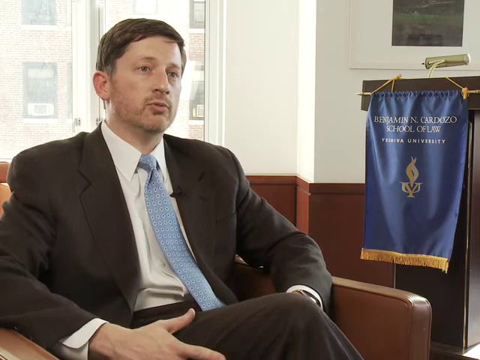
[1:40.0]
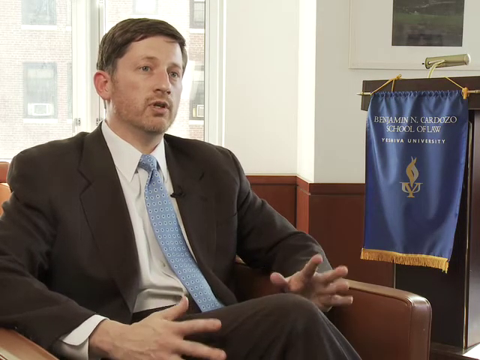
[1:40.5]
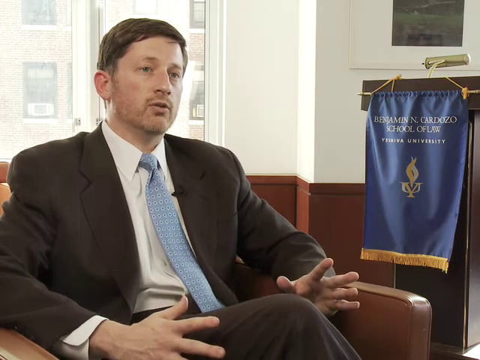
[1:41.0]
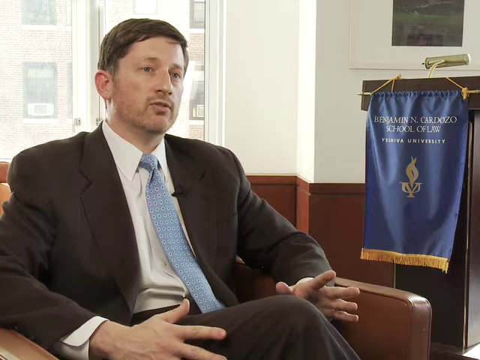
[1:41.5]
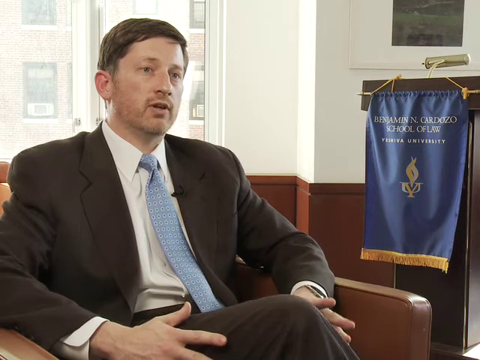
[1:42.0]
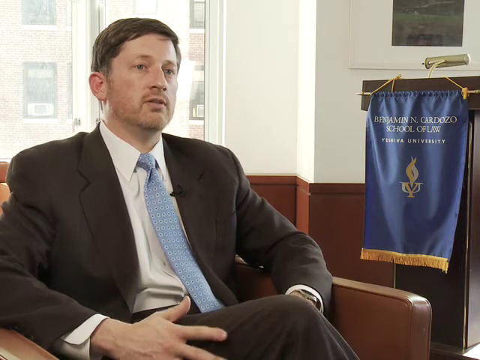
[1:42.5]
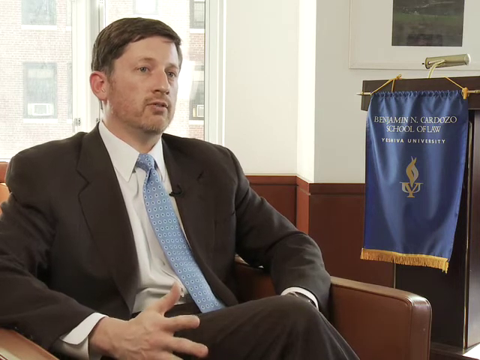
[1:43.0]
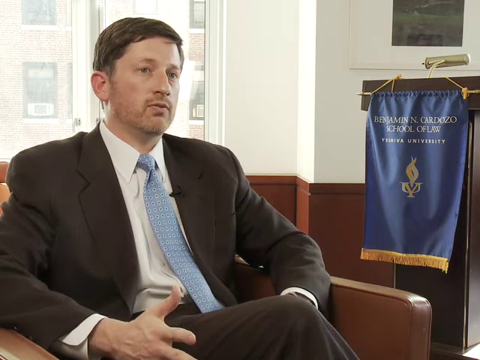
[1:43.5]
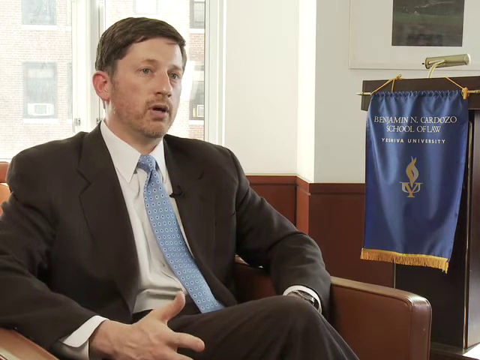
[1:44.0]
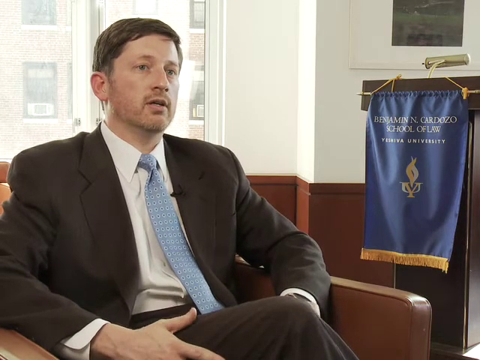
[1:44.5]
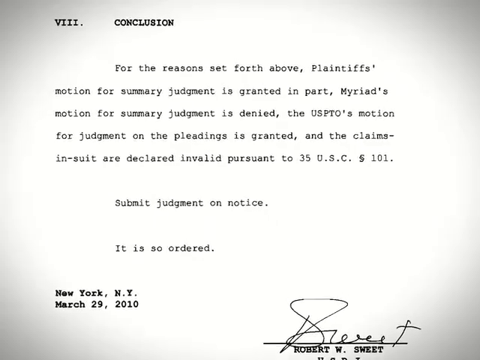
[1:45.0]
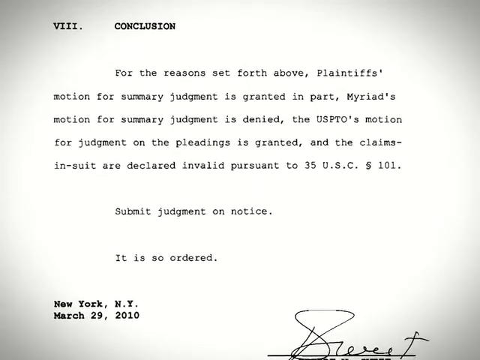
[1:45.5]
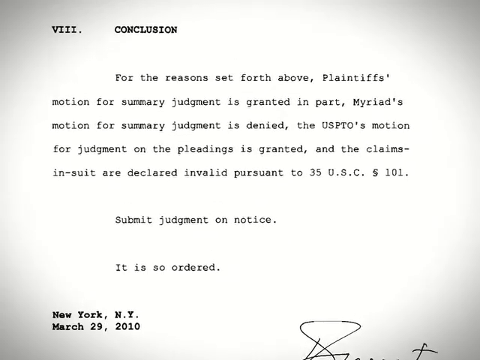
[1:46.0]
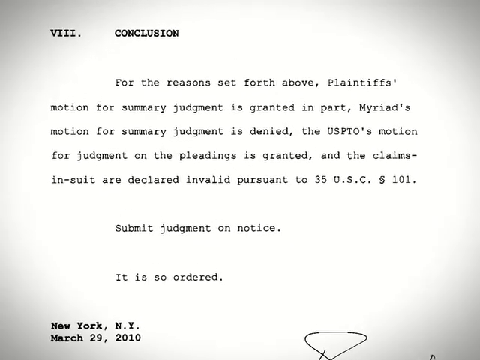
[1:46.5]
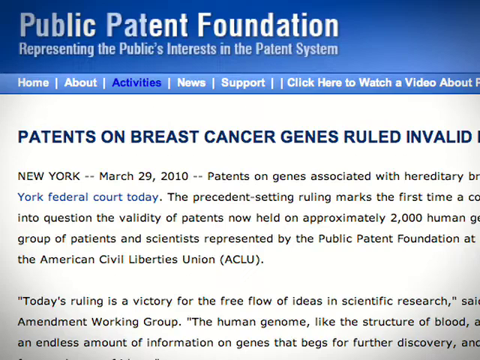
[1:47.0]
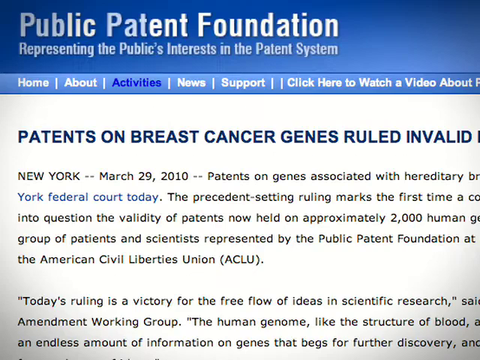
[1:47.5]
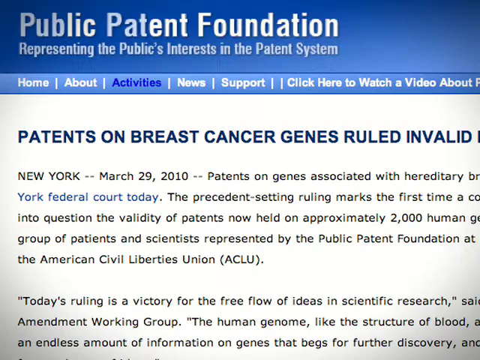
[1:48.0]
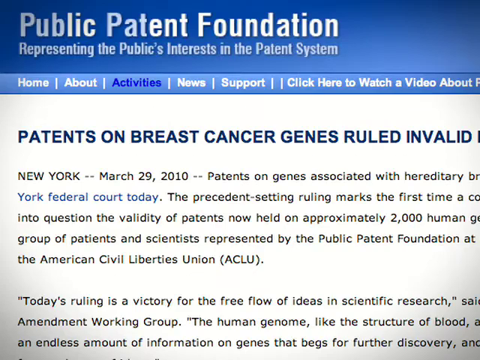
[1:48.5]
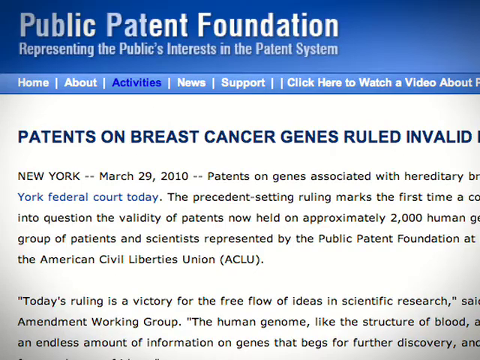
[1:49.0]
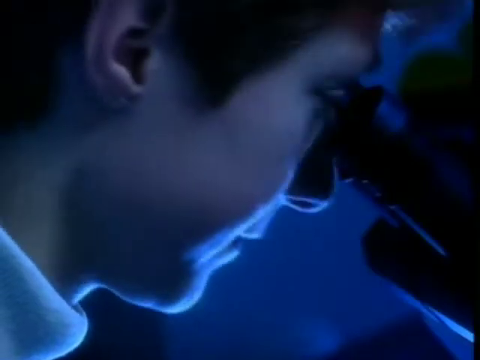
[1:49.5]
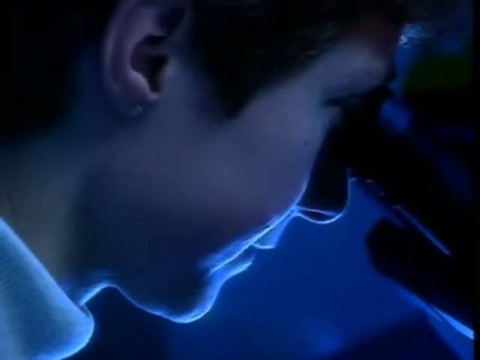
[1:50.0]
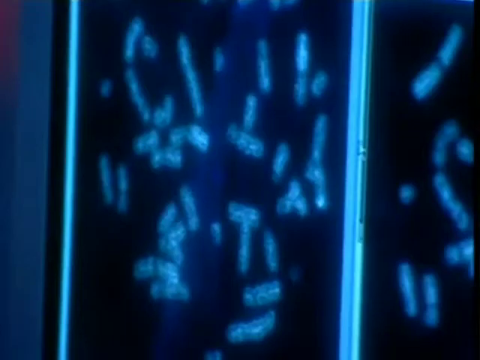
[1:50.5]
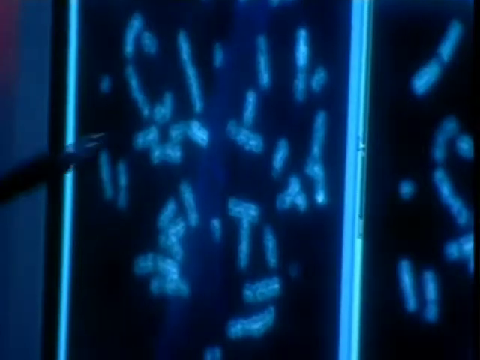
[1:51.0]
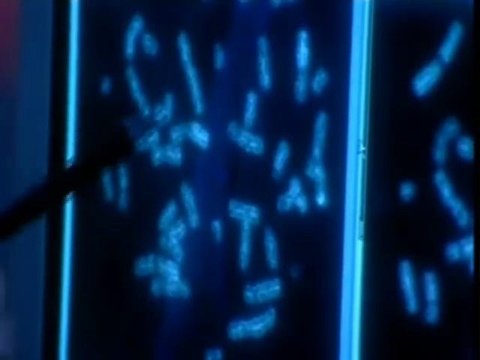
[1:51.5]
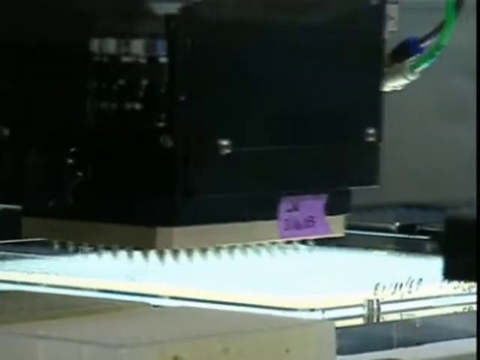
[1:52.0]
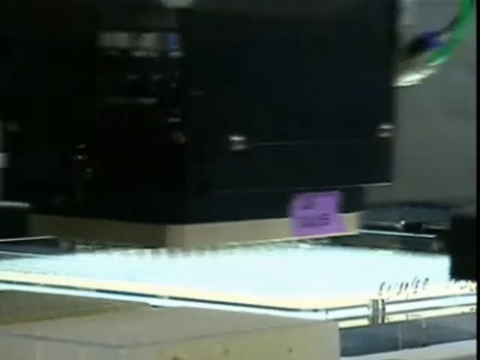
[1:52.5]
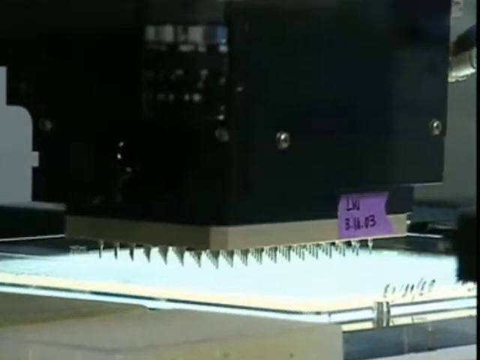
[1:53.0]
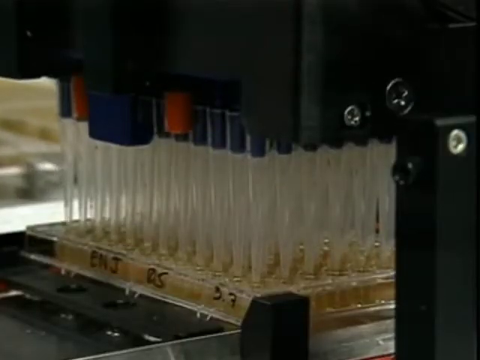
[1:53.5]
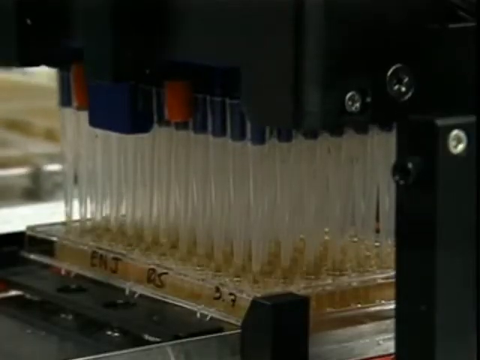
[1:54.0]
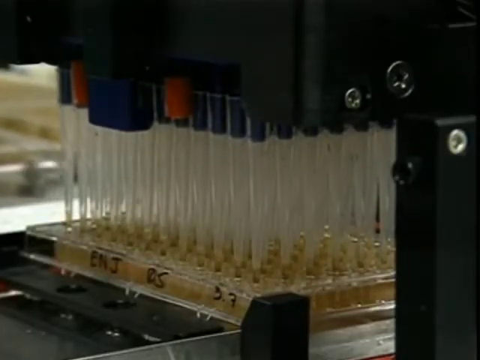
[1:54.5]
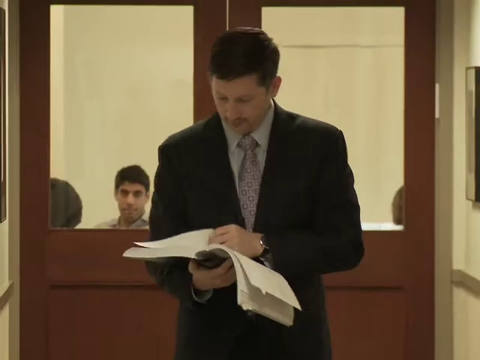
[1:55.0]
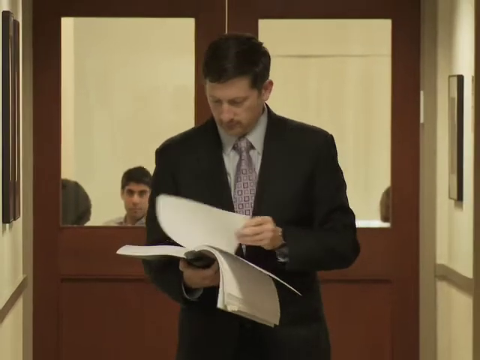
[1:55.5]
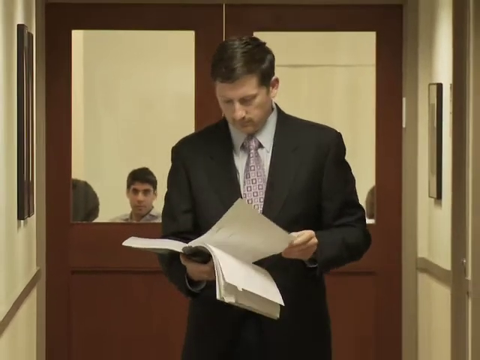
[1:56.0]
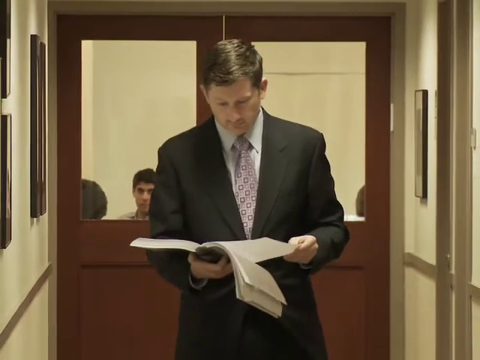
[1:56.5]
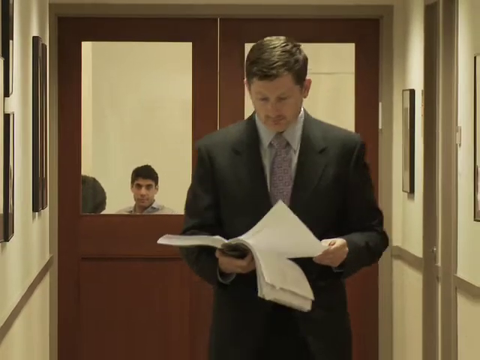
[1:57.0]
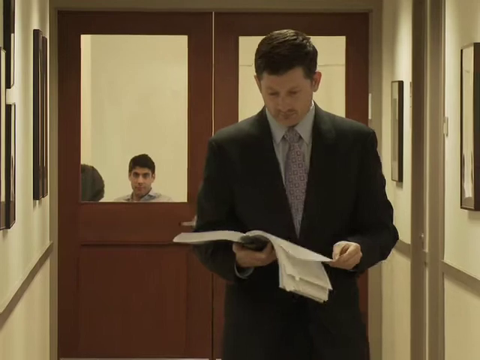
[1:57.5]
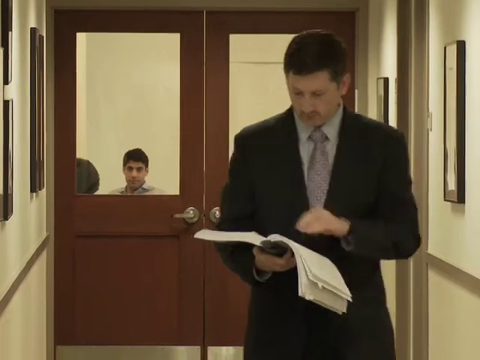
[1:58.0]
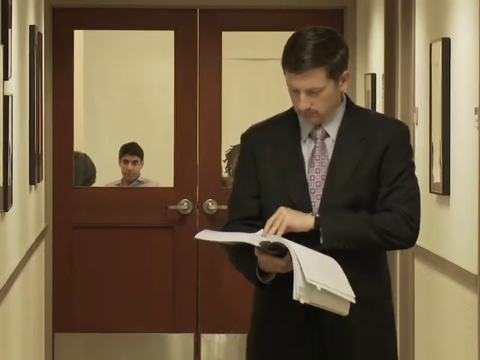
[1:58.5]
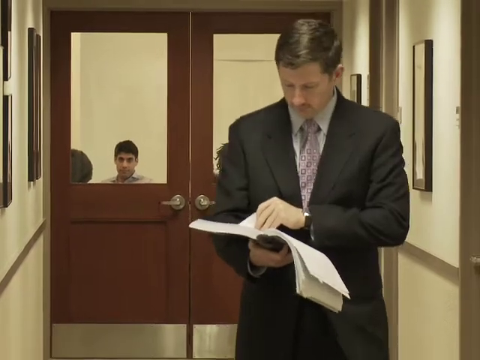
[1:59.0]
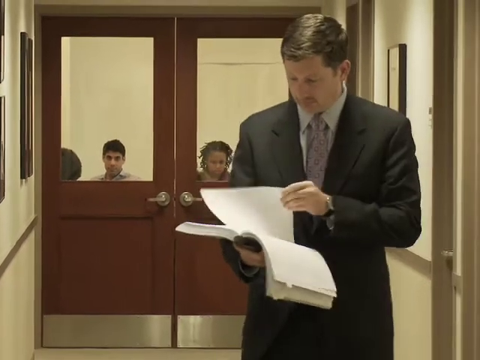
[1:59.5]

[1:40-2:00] A man on the left-hand side, probably in his 40s, has medium-length brown hair parted to the right and a five o'clock shadow, and wears a black suit, a light blue tie and a white dress shirt. He is sitting in a brown chair whose arm comes off in his direction, toward five o'clock. His hands are at his side and his right leg is crossed over his left. He talks as if in an interview, his hands repeatedly coming up with thumbs up and fingers splayed out in gestures. The video then goes to a zoomed-in view of a sheet of paper with a paragraph that reads "VIII conclusion. For the reasons set forth above, plaintiff's motion for summary judgment is granted in part. Myriad's motion for summary judgment is denied. The USPTO's motion for judgment on the pleadings is granted and the claims in suit are declared invalid pursuant to 35 USC 101." The view zooms in on it a little, then goes to a website, the Public Patent Foundation.